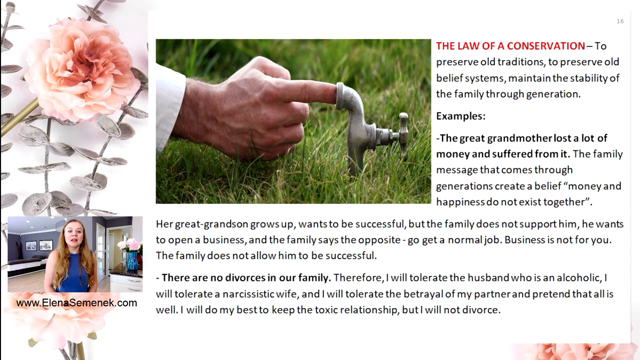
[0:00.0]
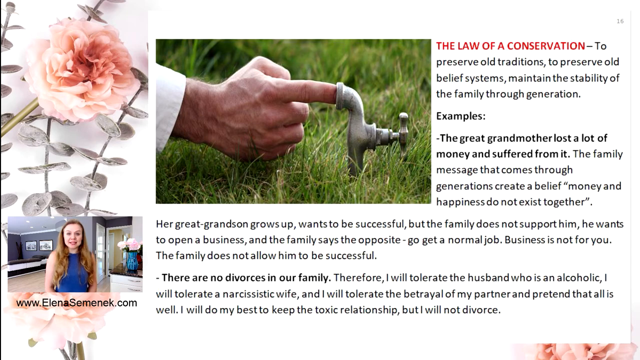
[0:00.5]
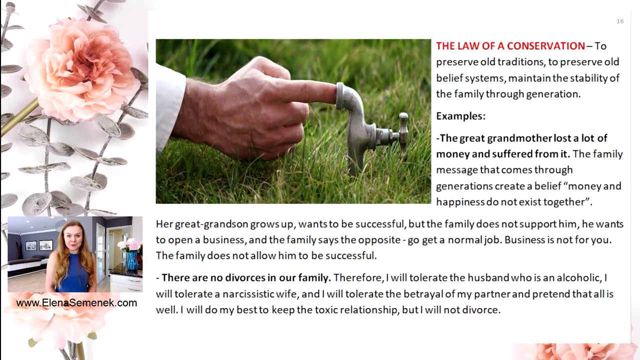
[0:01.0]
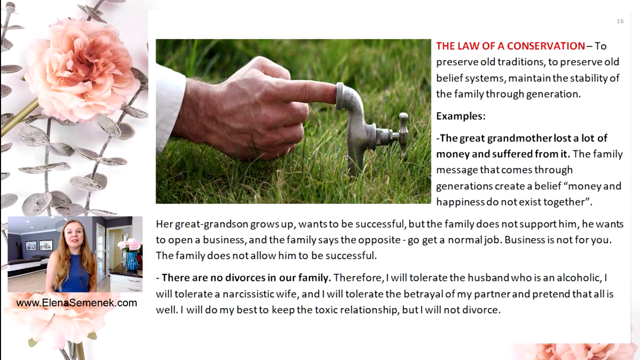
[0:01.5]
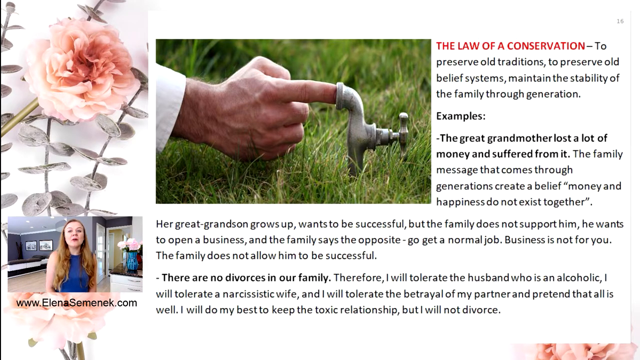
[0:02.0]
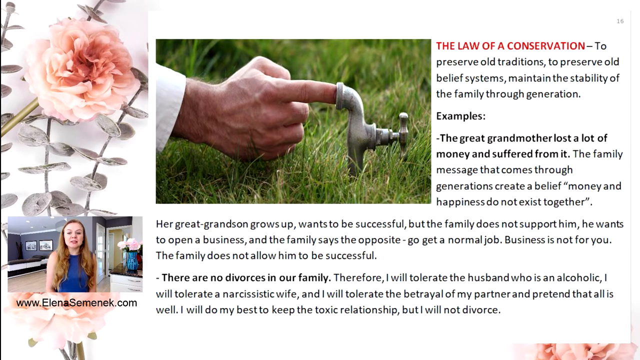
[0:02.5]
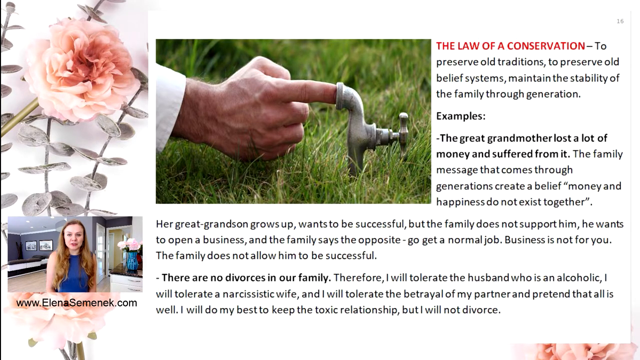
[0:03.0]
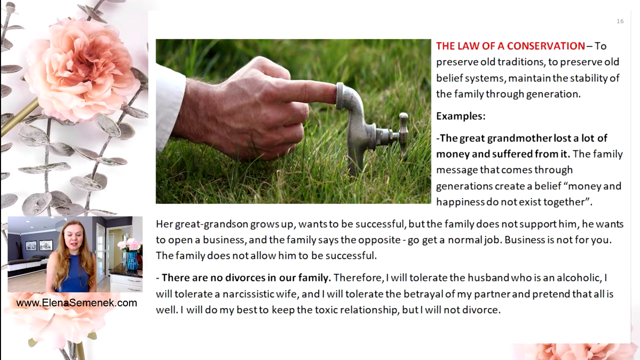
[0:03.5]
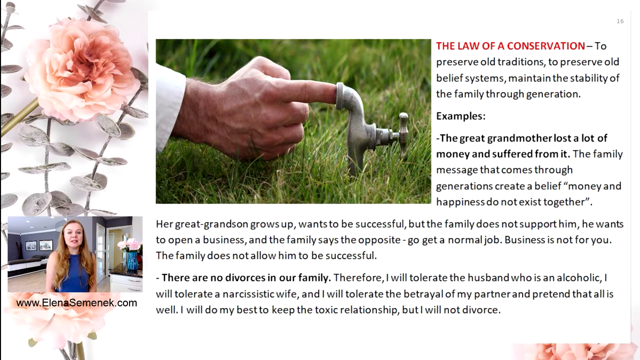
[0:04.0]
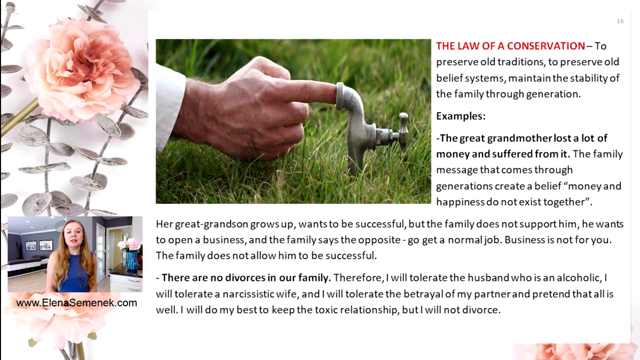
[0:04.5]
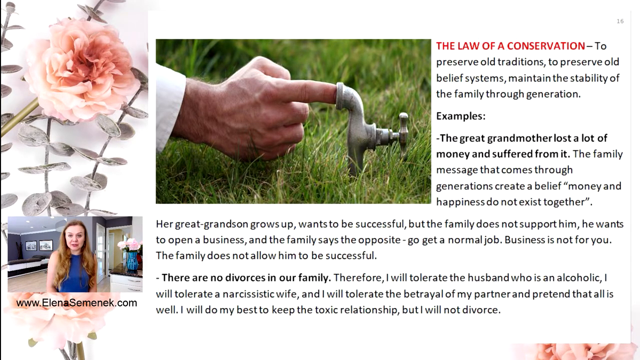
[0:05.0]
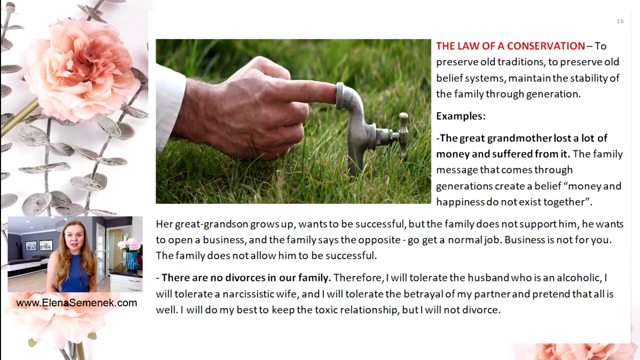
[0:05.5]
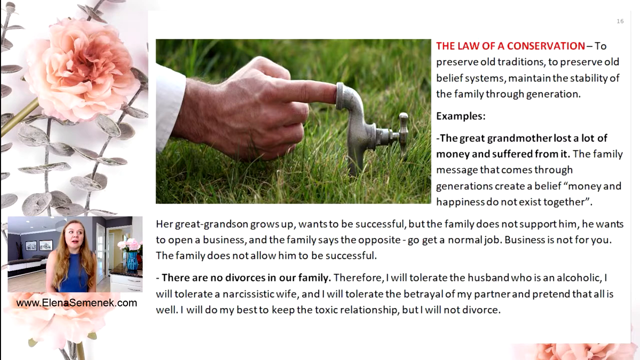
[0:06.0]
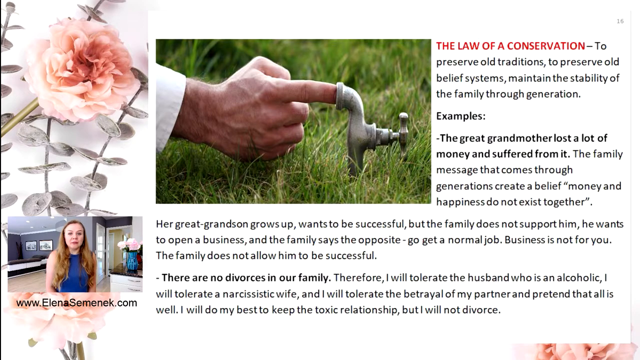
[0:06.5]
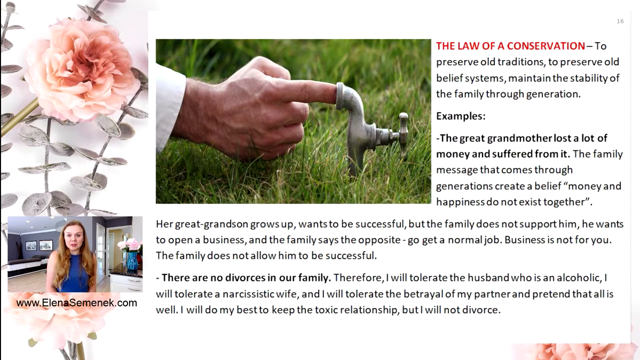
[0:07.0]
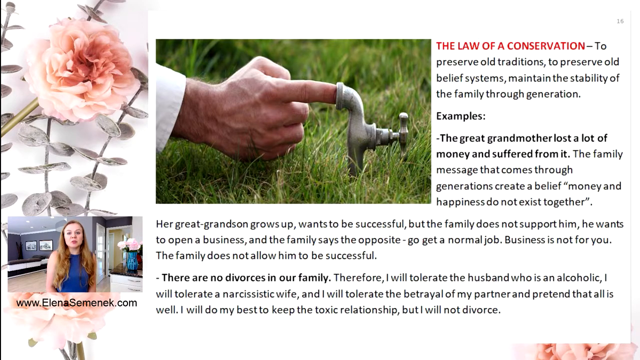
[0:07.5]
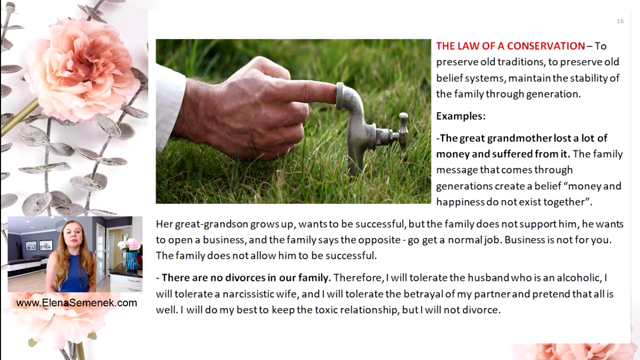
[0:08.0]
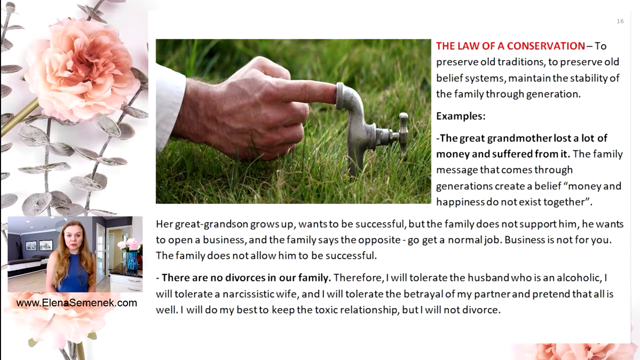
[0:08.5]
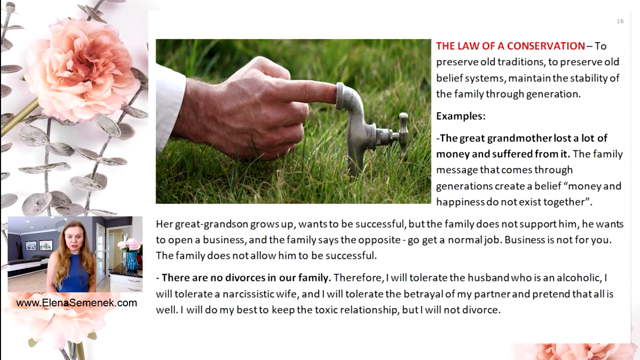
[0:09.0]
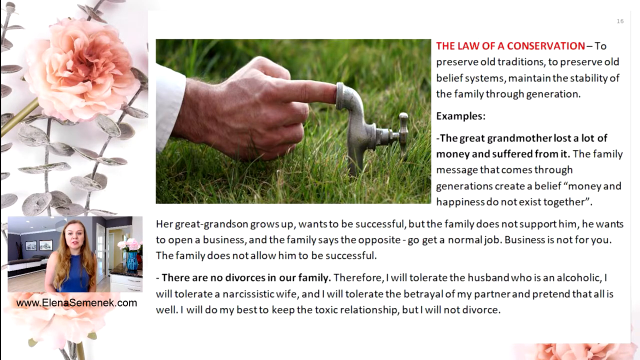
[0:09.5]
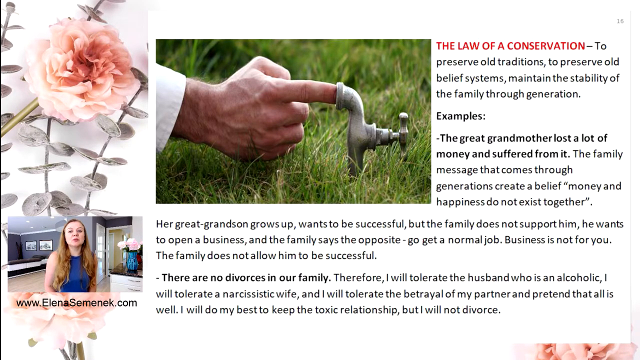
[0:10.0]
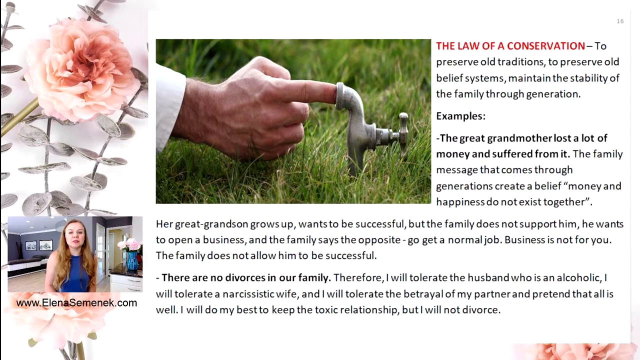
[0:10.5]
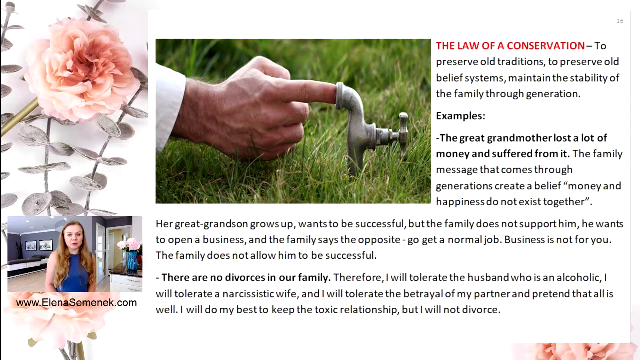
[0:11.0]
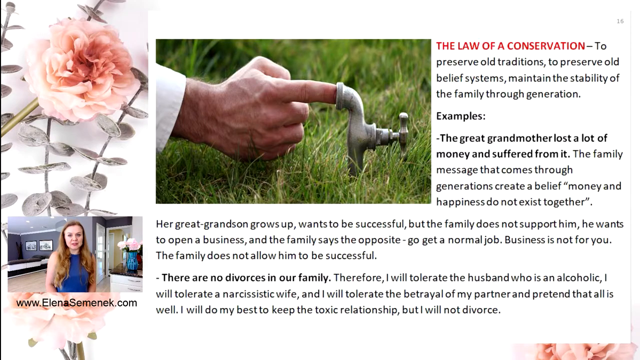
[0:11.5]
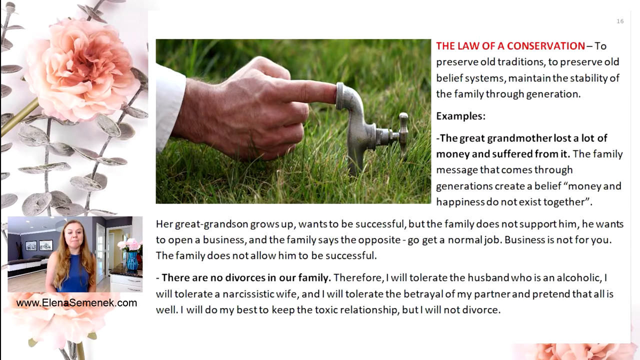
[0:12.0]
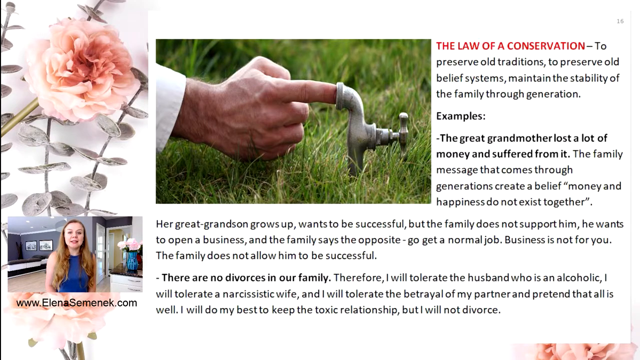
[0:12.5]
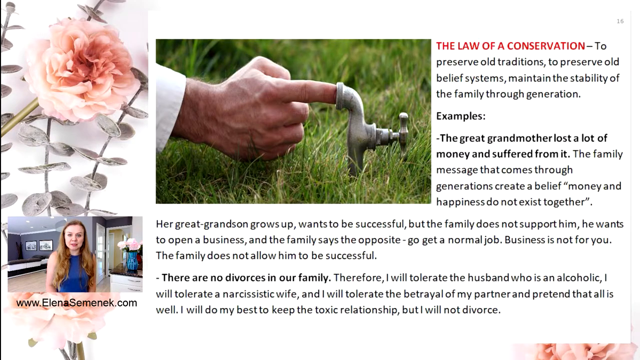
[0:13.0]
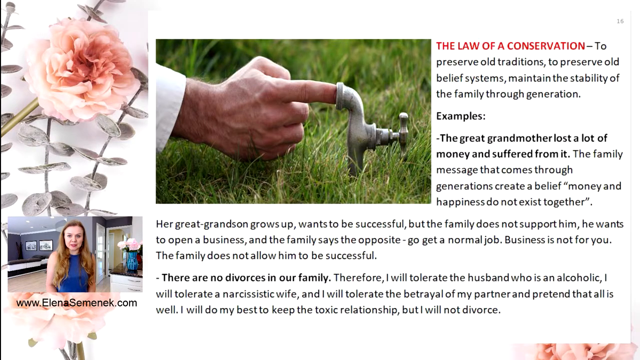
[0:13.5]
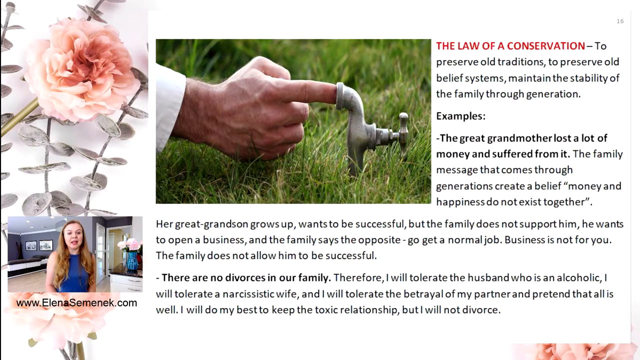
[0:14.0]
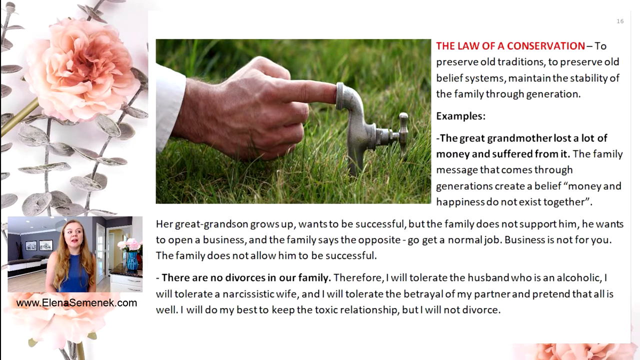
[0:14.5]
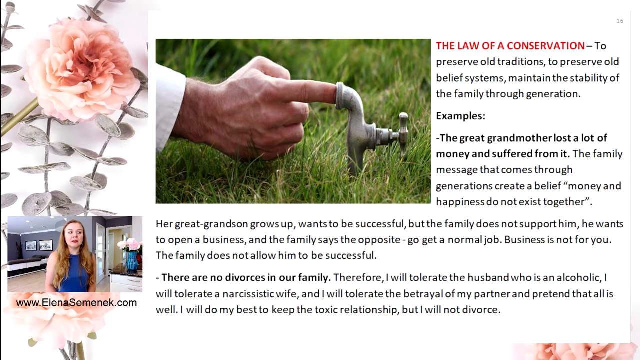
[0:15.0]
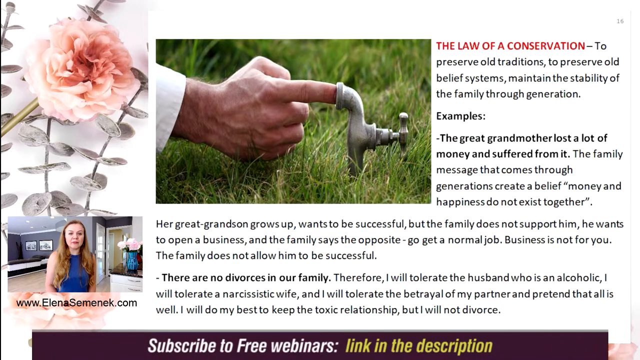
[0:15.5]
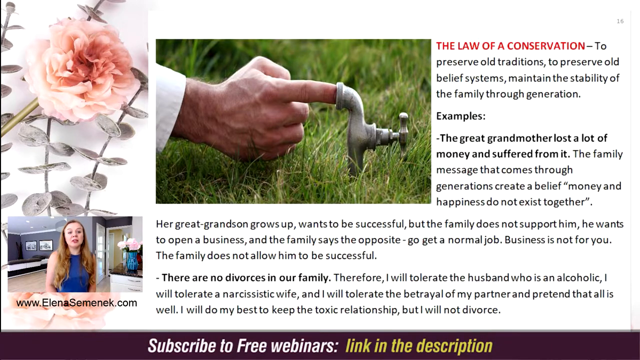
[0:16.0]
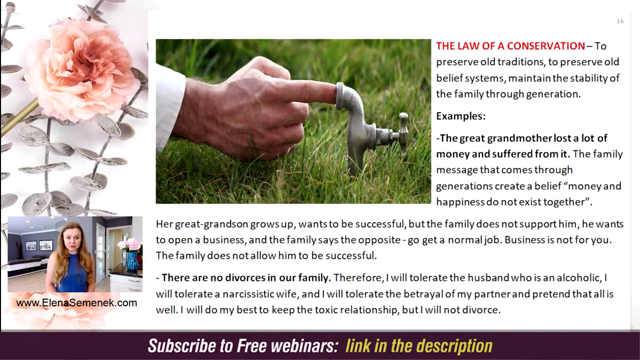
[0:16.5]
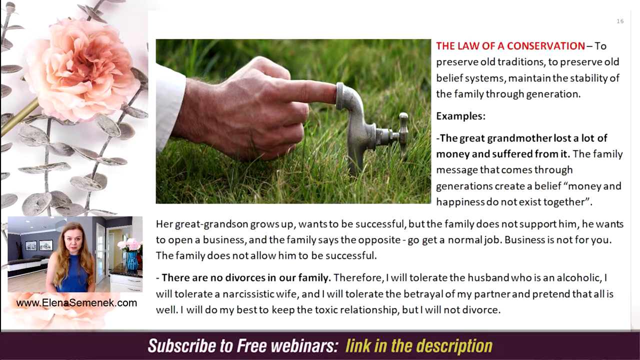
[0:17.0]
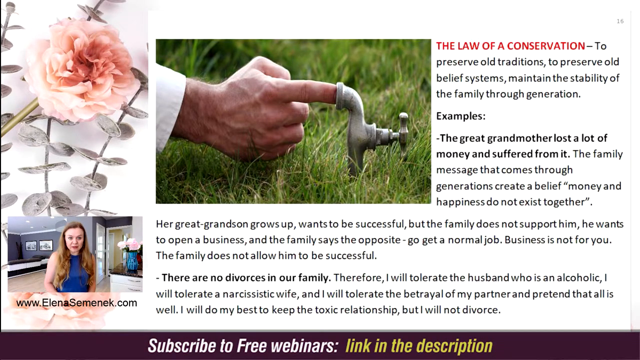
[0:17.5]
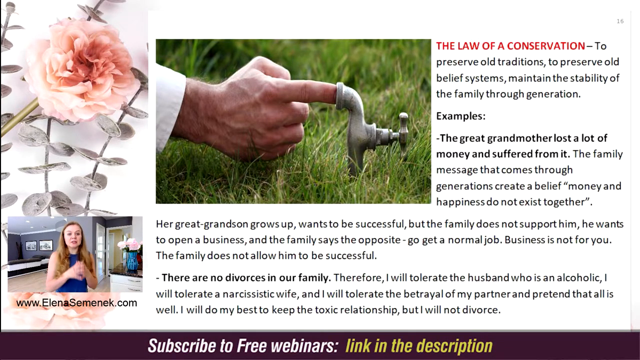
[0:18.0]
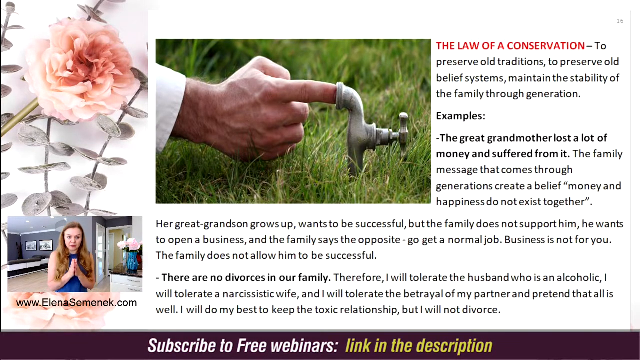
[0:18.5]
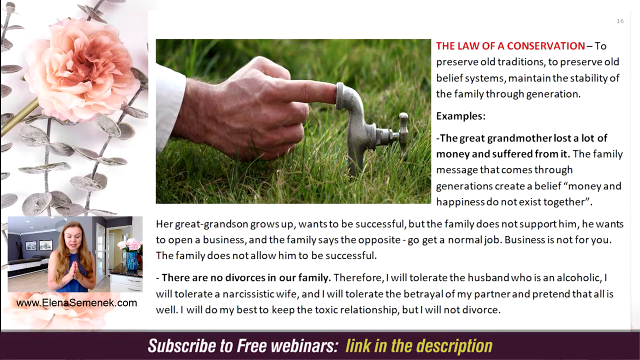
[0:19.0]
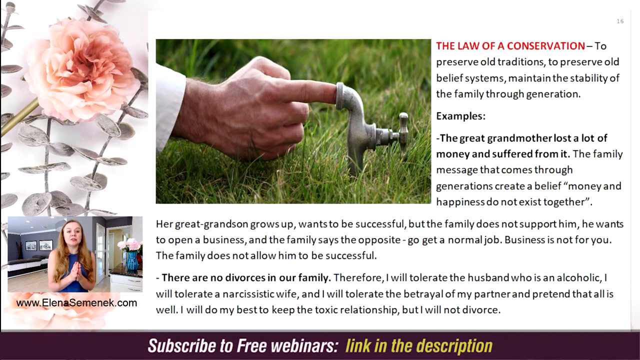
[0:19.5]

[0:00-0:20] A full-screen slide fills the frame, with a live video of a lady in the lower left corner. Below it, a link reads "www.elenasemenek.com". The lady has blonde hair and wears a sleeveless blue blouse. The slide is very simple: a white background, an image of a pink flower on the left, and on the right a very wide image of the hand of a man or woman, possibly in their 40s or older, with a finger covering the hole of a water key coming out of the ground. The same slide stays on screen throughout the video; the only thing that changes is the lady's body language.